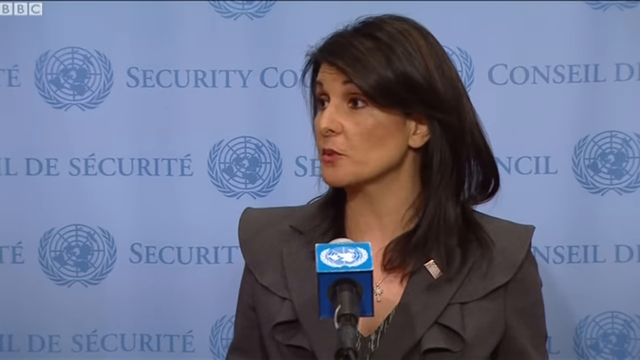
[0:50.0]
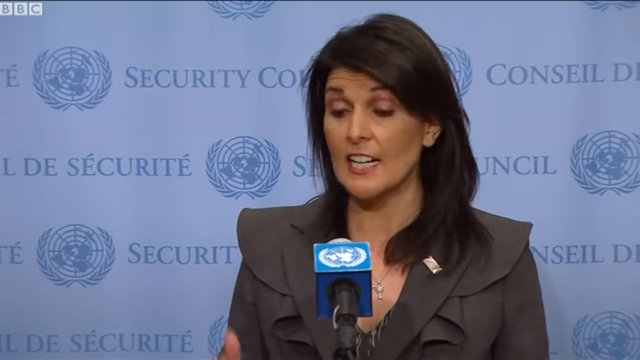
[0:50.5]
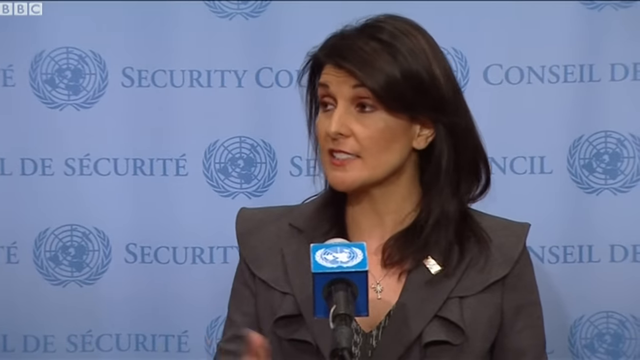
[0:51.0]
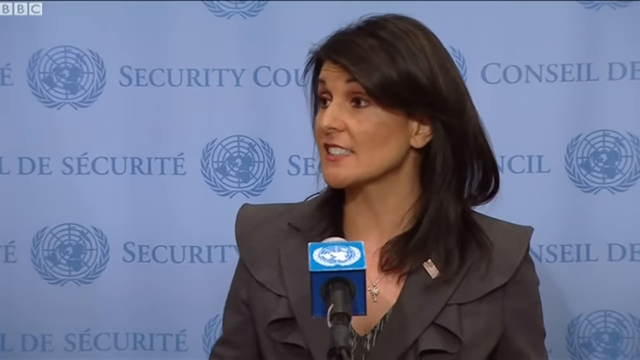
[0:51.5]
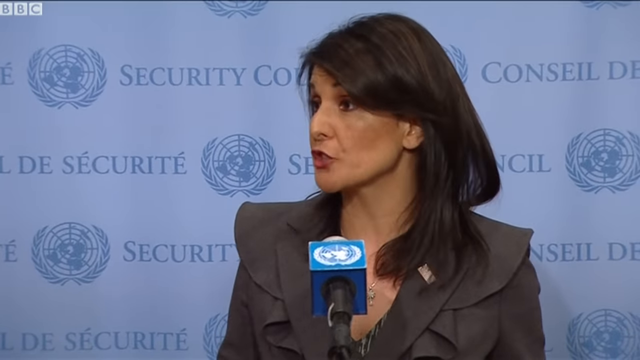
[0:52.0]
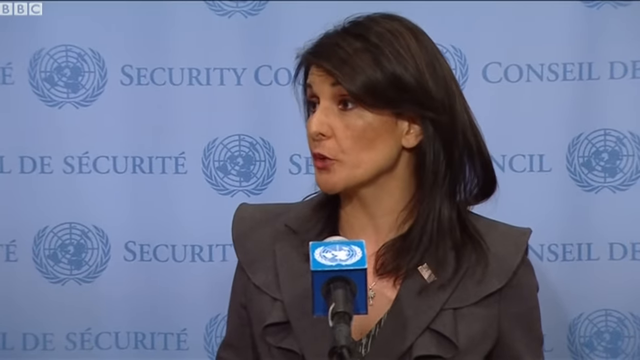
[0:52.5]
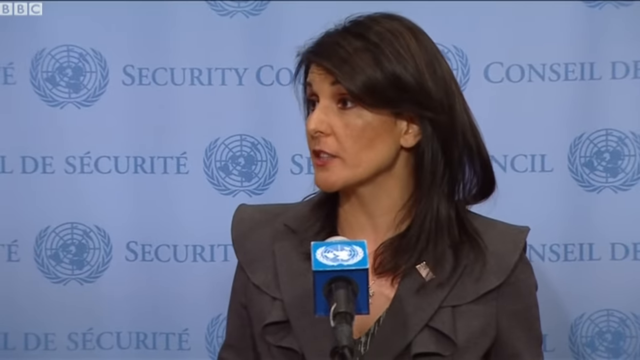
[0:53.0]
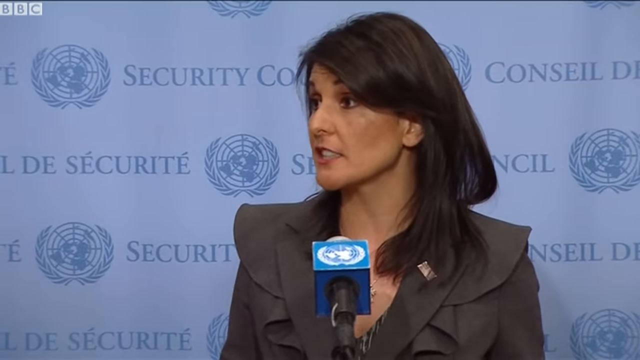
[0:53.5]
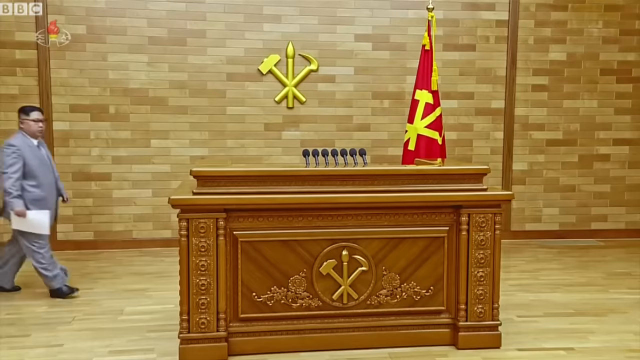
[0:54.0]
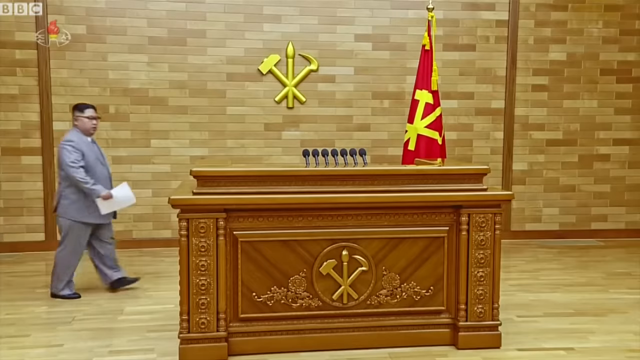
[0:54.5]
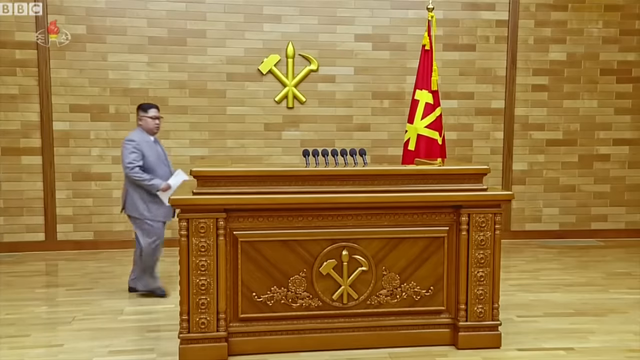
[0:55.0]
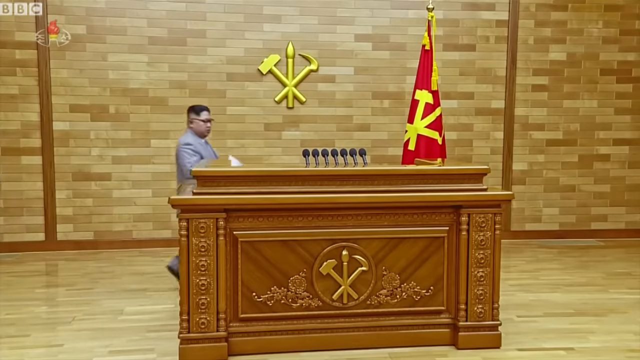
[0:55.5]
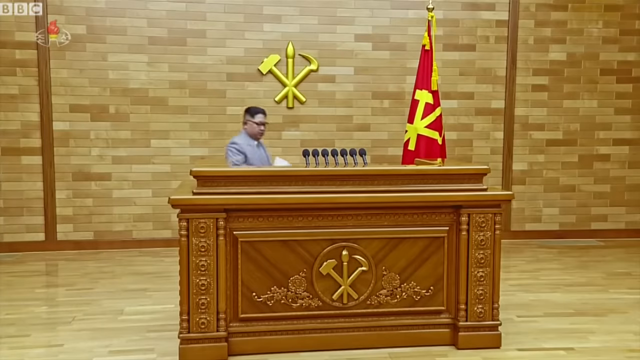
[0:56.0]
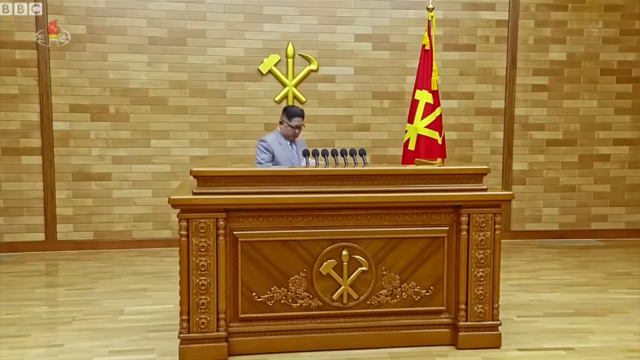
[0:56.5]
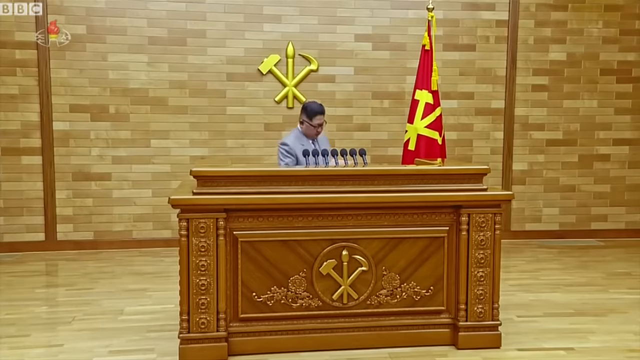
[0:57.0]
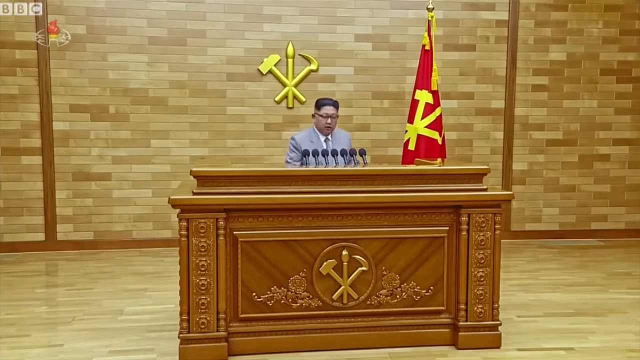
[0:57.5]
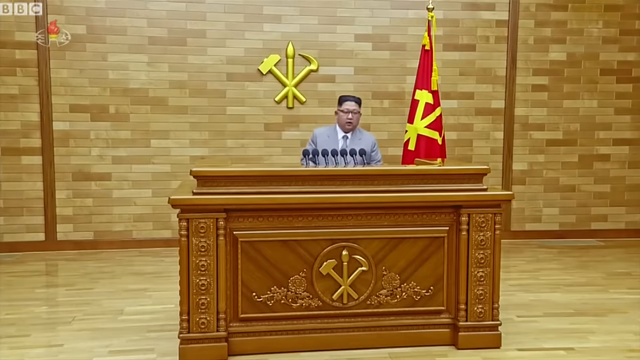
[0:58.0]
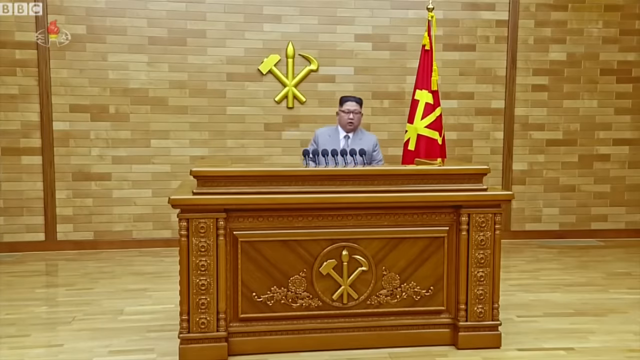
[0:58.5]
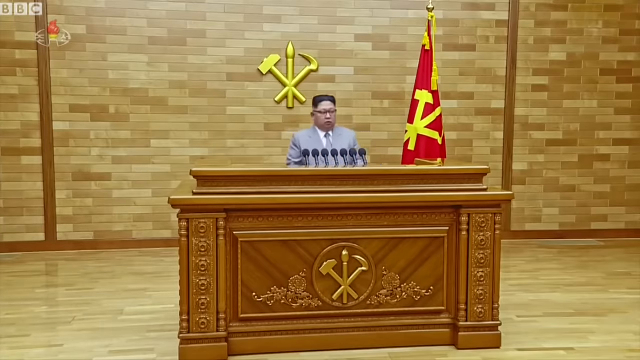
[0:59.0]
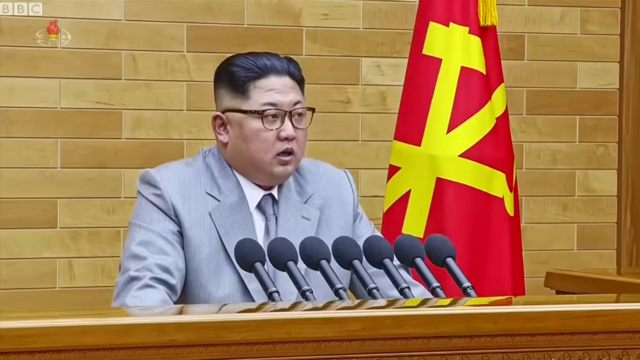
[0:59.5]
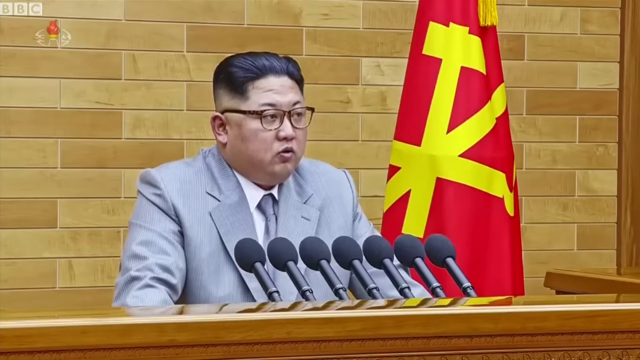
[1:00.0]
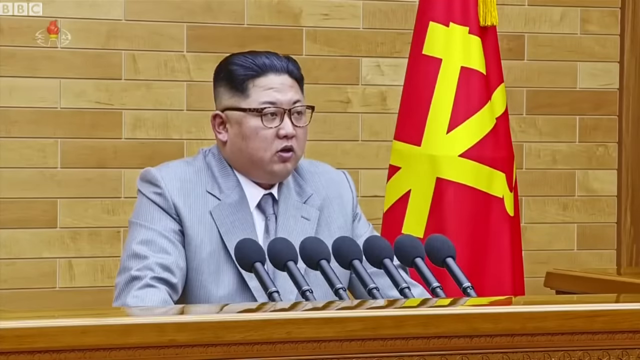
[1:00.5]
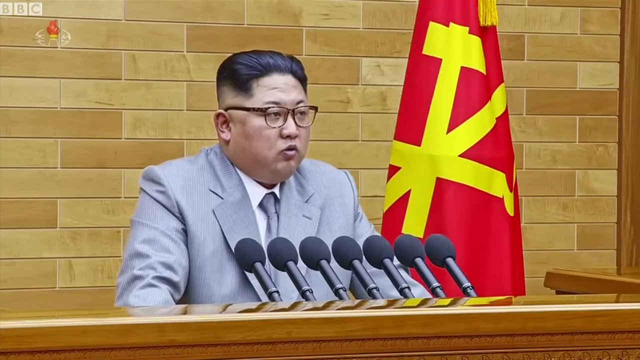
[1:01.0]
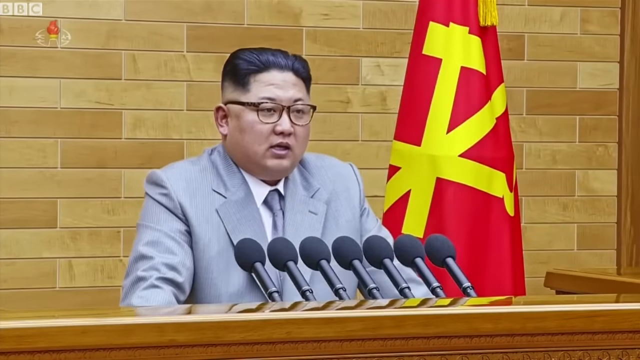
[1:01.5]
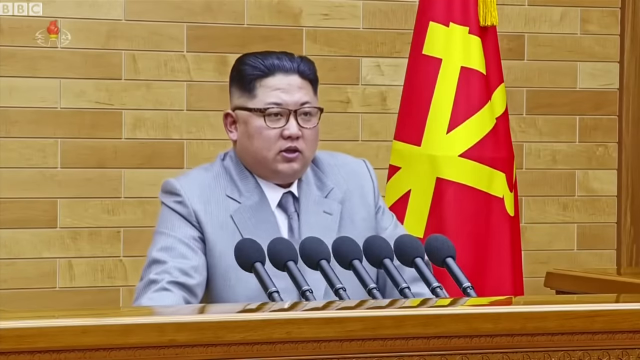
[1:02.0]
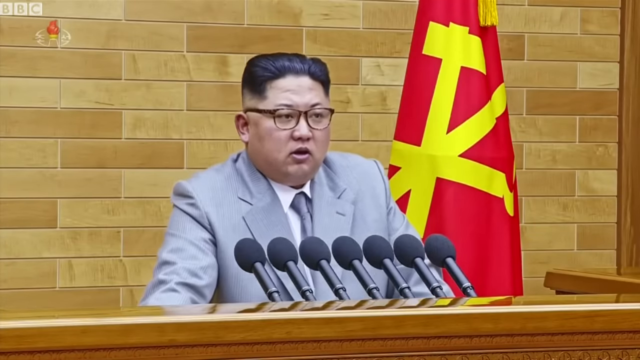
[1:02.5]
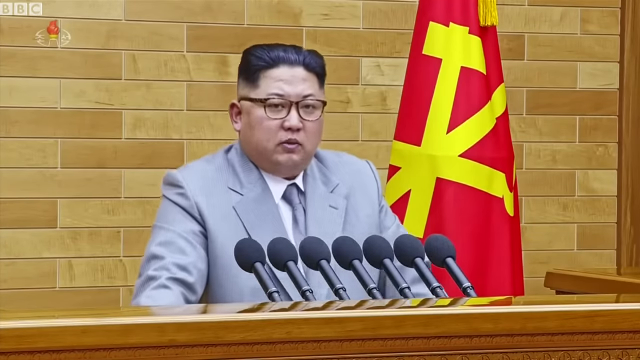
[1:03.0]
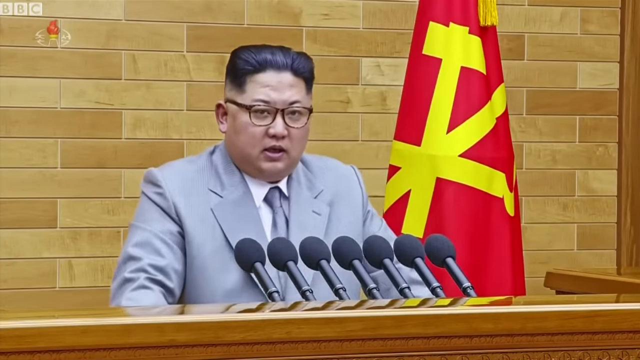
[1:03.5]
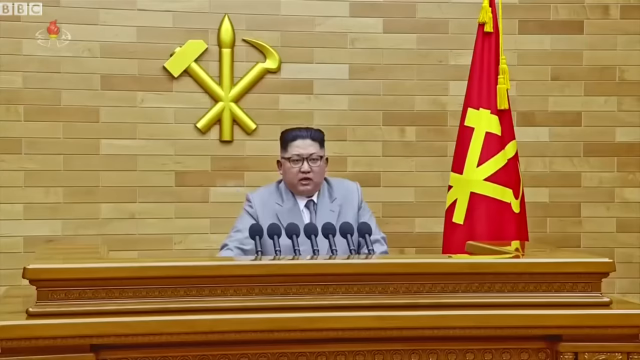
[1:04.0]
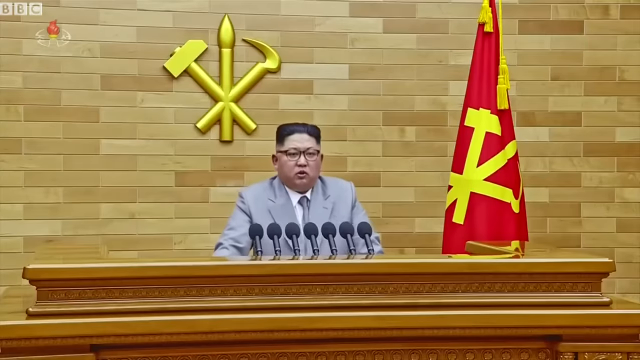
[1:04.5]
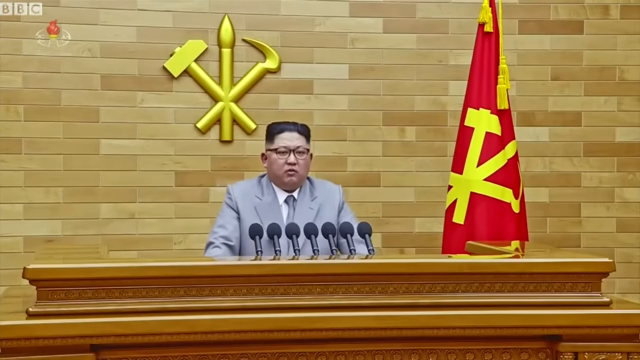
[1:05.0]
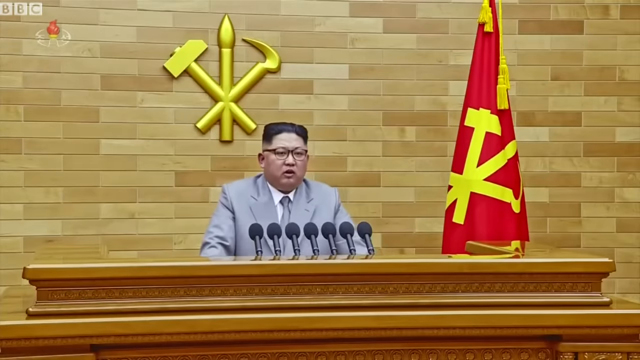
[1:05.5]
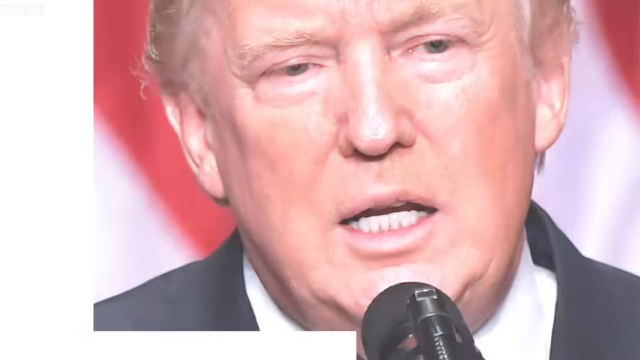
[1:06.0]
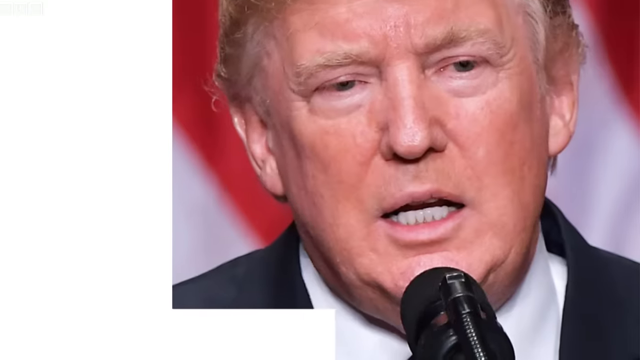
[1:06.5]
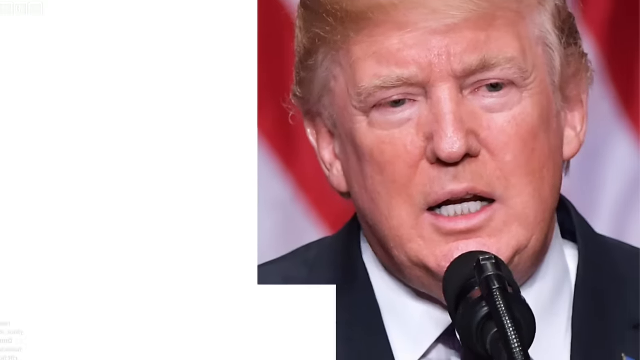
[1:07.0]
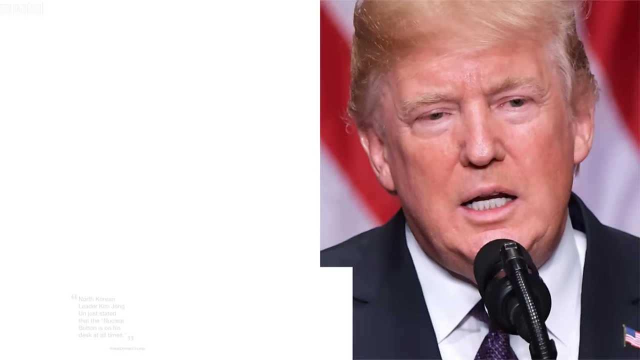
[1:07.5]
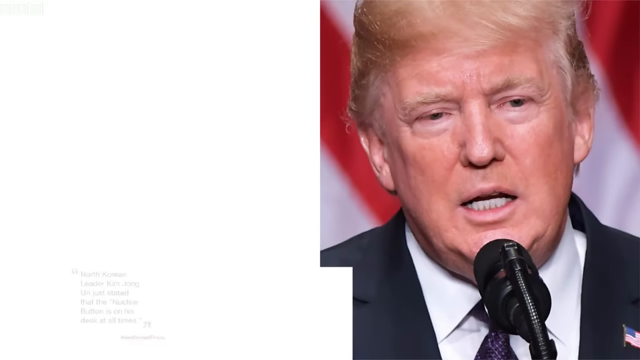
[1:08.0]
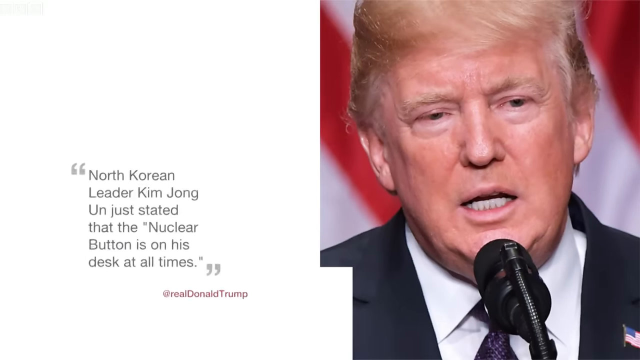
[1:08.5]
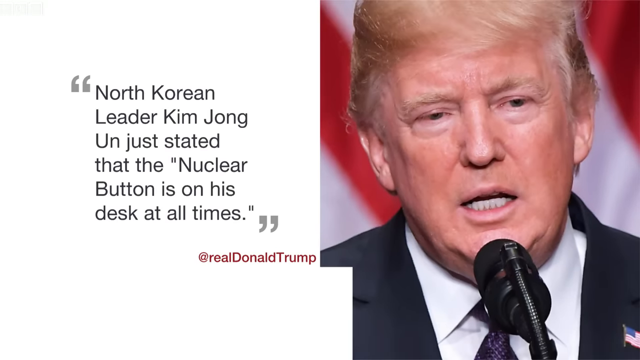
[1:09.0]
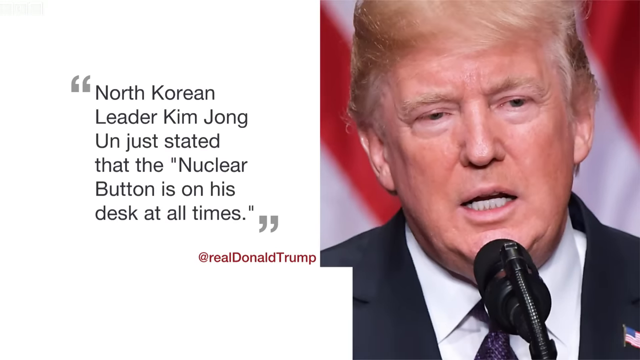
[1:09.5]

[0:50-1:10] The woman at the podium is shown talking, possibly at what seems to be some sort of press conference. The screen behind her reads "Security Council" in both English and French, with the United Nations logo, and the microphone in front of her on the podium also bears the United Nations logo. The scene then transitions to a wooden and golden podium with seven microphones on top. A flag with red and golden symbols is on its right, and the same symbol, a hammer, a sickle, and what seems to be a pick, appears on the wall behind it, which has a tile design that looks like a brick wall. North Korean leader Kim Jong Un walks into the area, walks over to the podium, and starts talking. The video then transitions to a photograph of Donald Trump talking at a microphone, with text extracted from another of his tweets next to him and his Twitter address in the bottom right corner. The text reads, "North Korean leader Kim Jong Un just stated that the nuclear bomb is on his desk at all times."